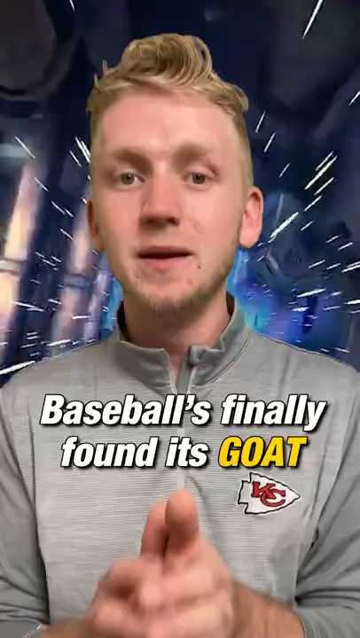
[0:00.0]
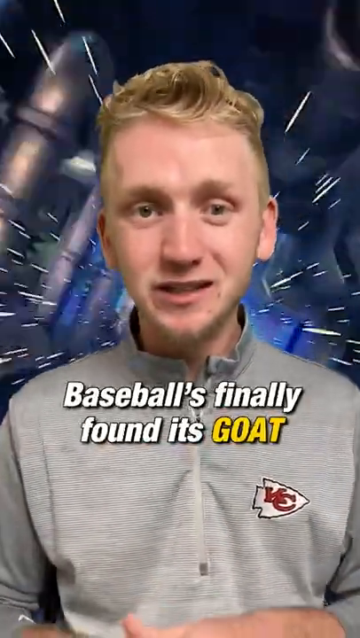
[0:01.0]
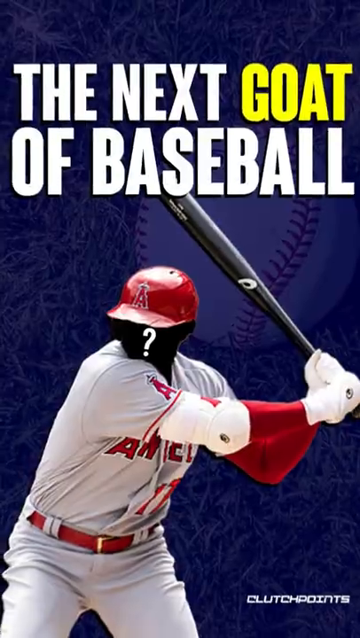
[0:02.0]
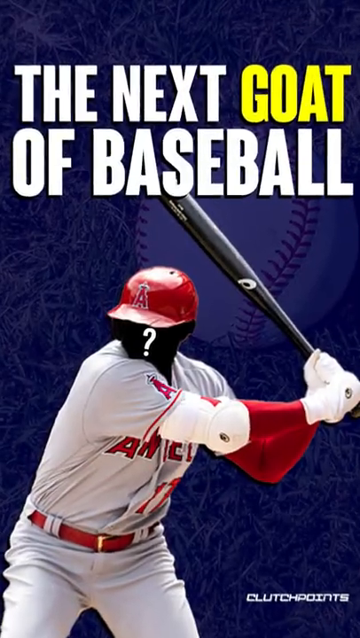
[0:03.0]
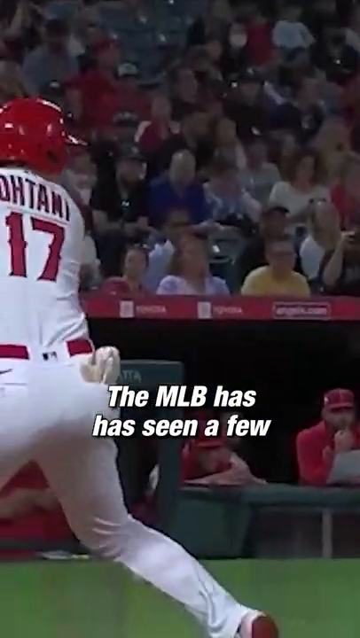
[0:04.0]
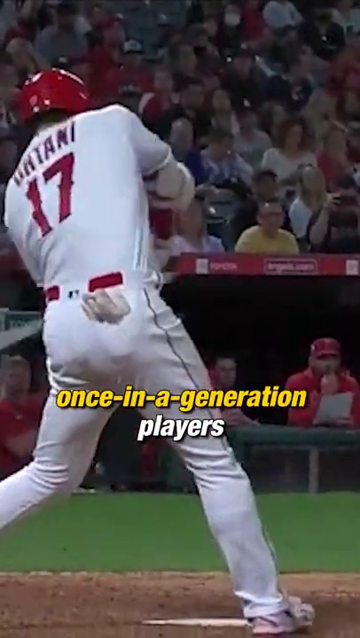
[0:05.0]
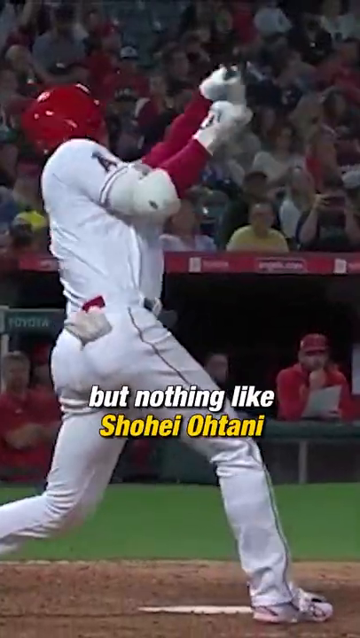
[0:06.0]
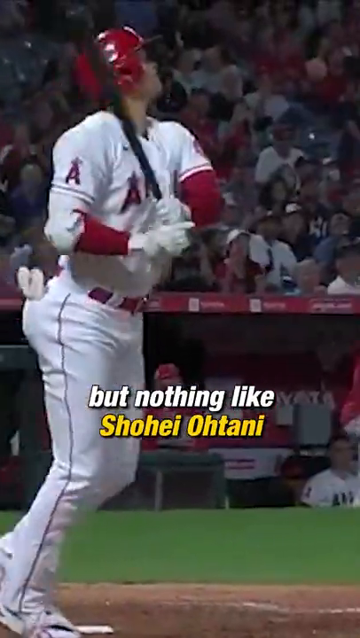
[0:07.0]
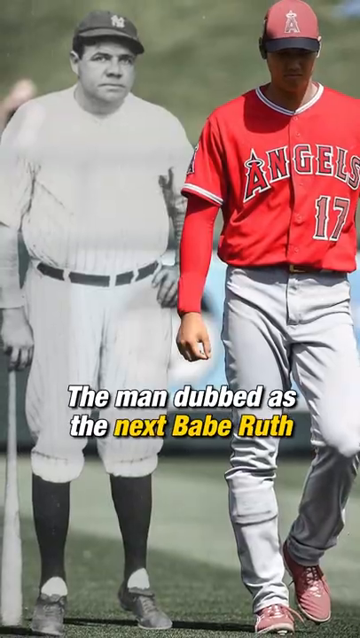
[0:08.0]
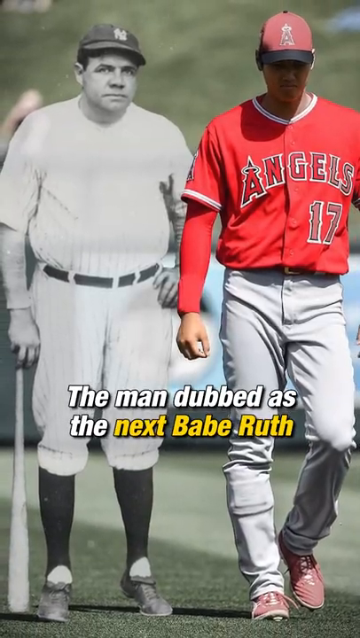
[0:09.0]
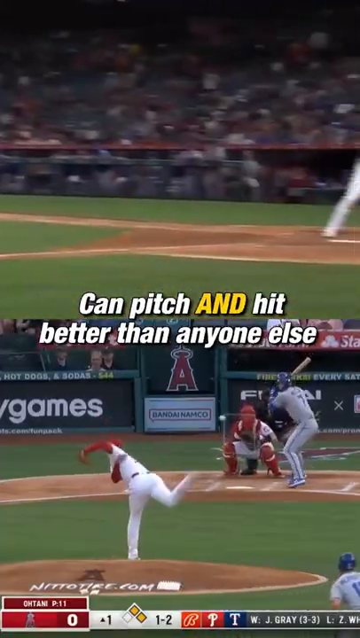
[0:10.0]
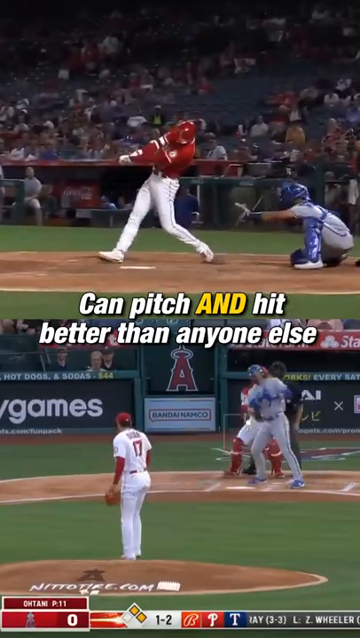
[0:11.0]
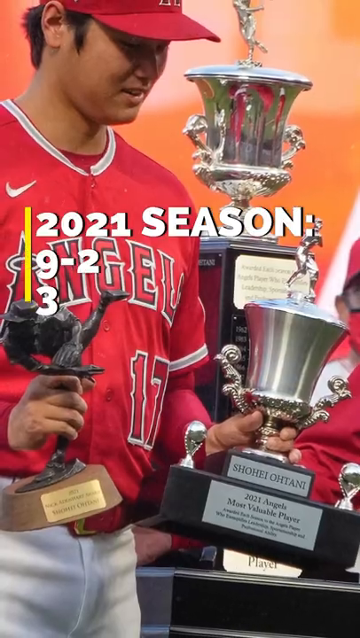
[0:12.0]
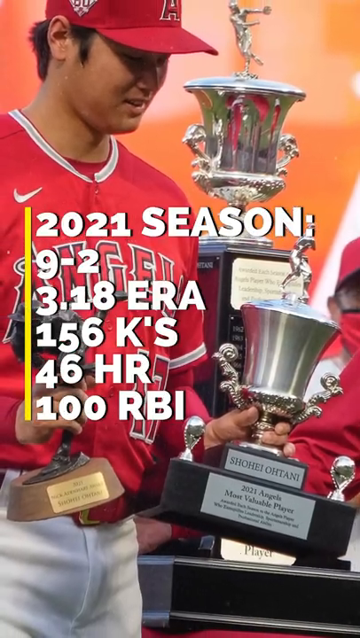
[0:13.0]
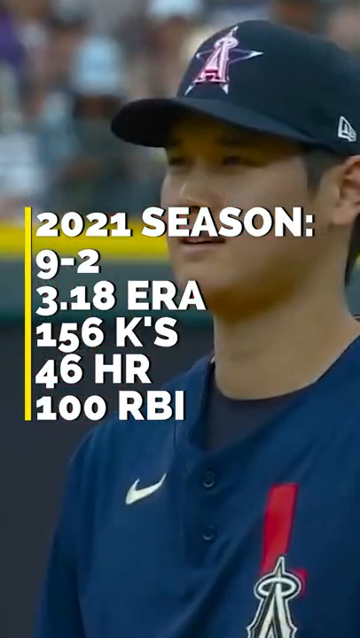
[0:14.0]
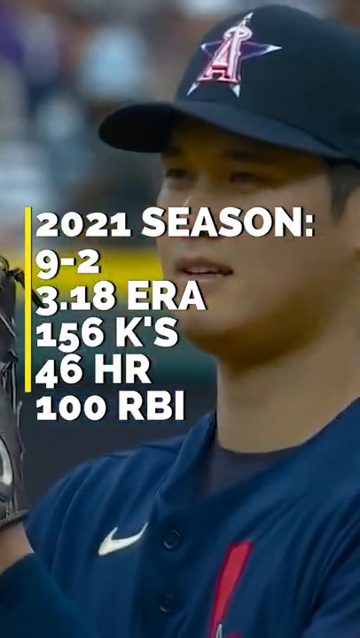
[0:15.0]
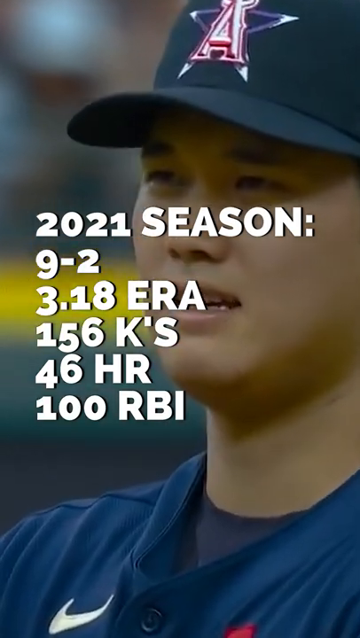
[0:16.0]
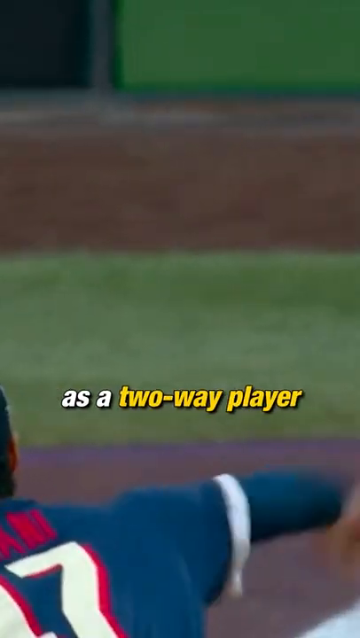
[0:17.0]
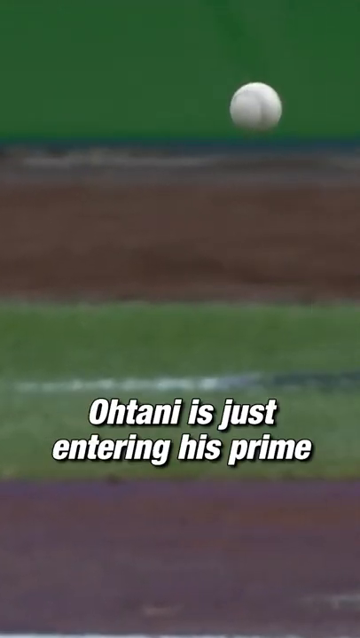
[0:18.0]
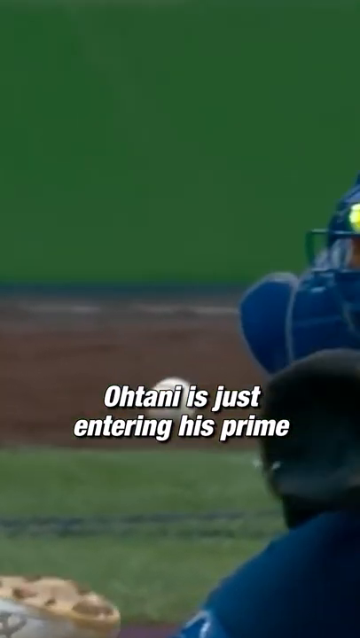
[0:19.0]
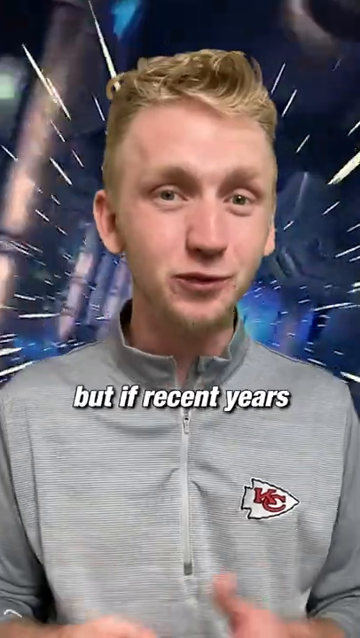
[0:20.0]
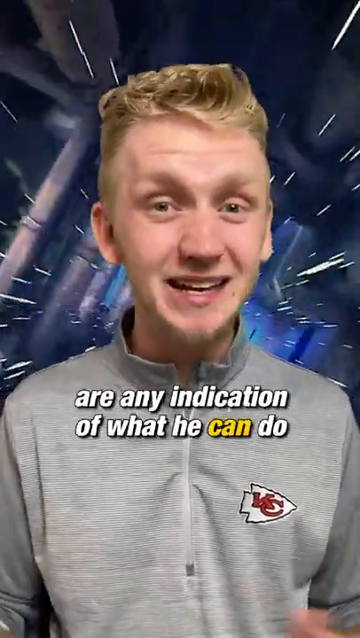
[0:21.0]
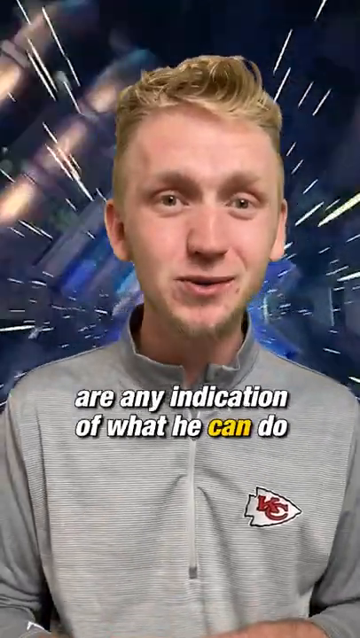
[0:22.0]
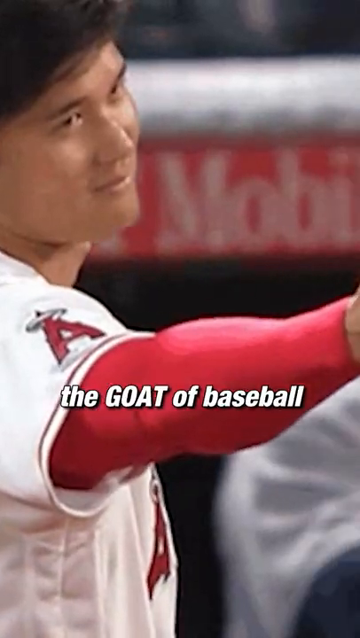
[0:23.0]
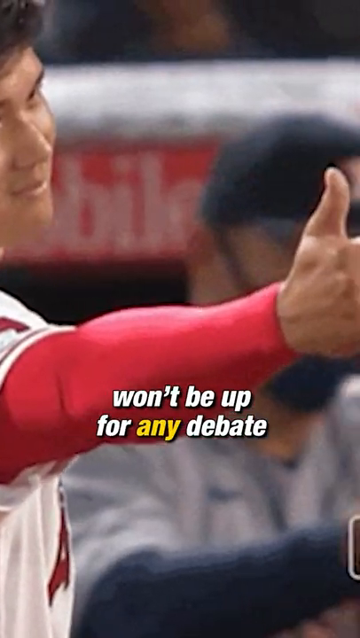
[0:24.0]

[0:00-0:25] A man says baseball has finally found its goat, while subtitles and on-screen graphics describe Shohei Otani. The graphics read "The goat of baseball won't be up for any debate," "The baseball has finally found its goat," "Major League Baseball has seen a once-in-a-generation player, but nothing like Shohei Otani," "He could be the next Babe Ruth," and "can pitch and hit better than anyone else." Graphics also show his 2021 season, 9-2, and identify him as a two-way player. Further graphics display his record, RBI and similar stats. The host appears again, calling him its goat, the next goat of baseball. Shots of Otani hitting follow, then a composite picture of Babe Ruth next to Otani. Otani is holding a bunch of trophies while his stats are shown, with video of him pitching in the background. The same clips of Otani playing repeat over and over in a mix of photos and videos.